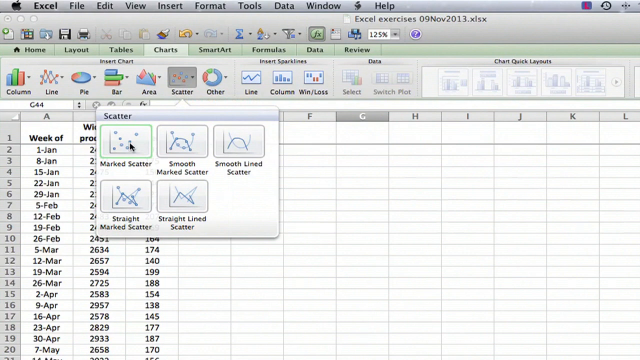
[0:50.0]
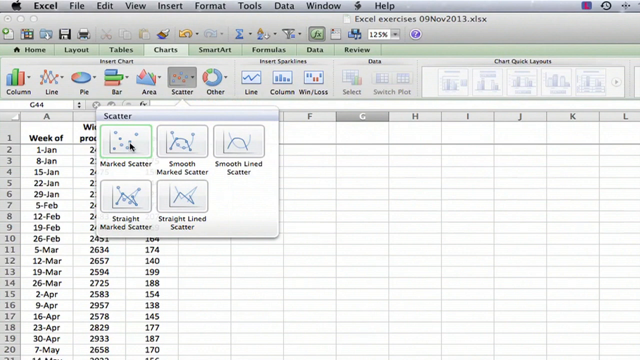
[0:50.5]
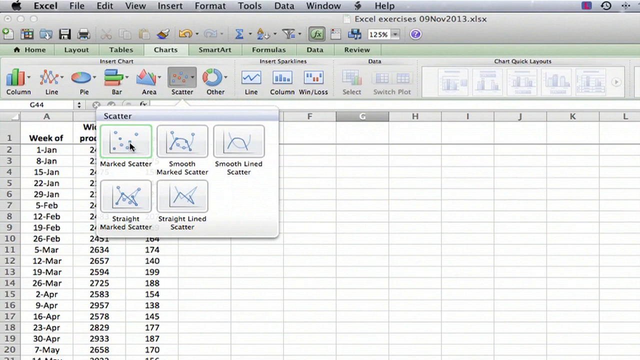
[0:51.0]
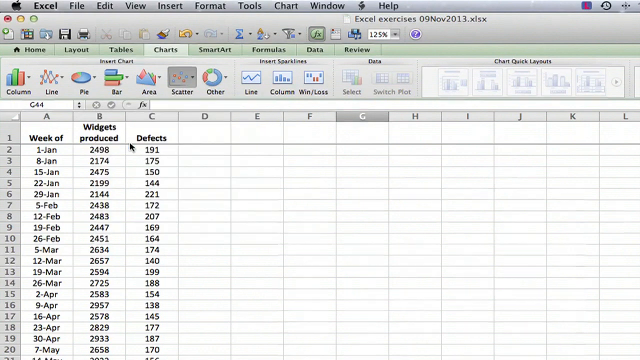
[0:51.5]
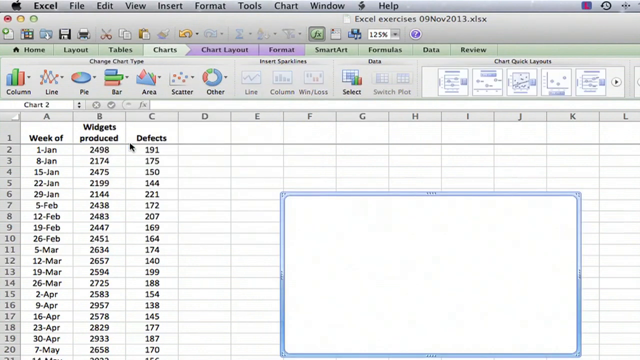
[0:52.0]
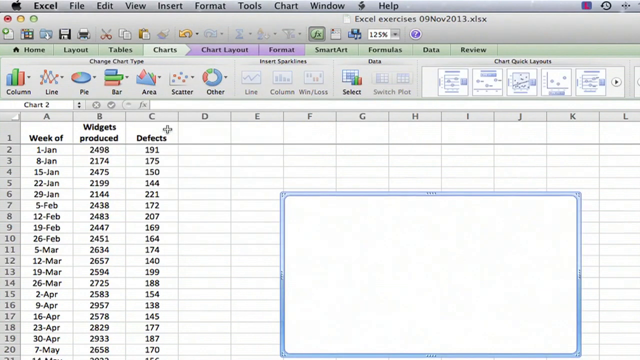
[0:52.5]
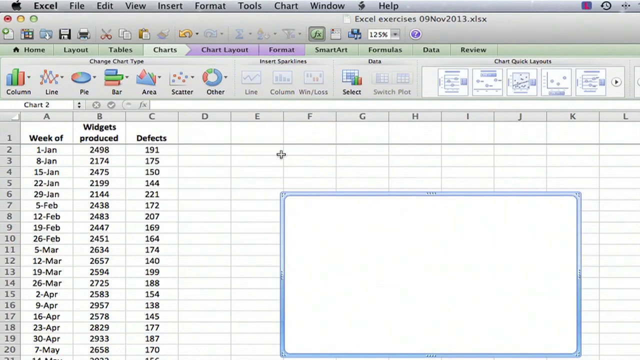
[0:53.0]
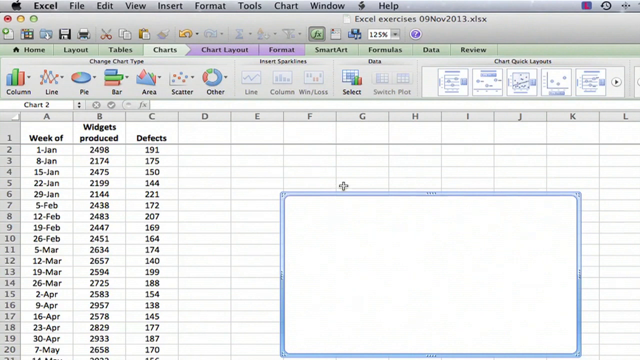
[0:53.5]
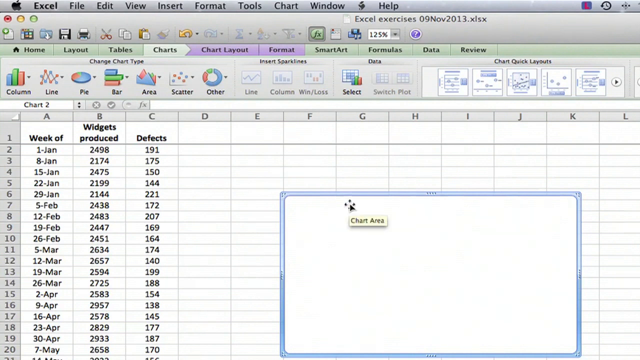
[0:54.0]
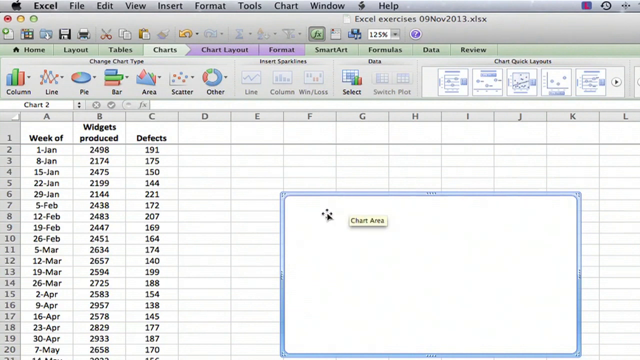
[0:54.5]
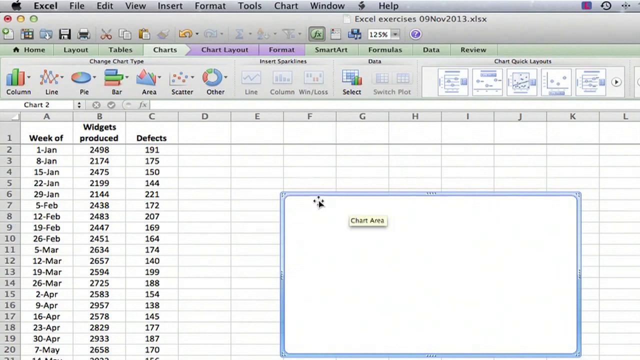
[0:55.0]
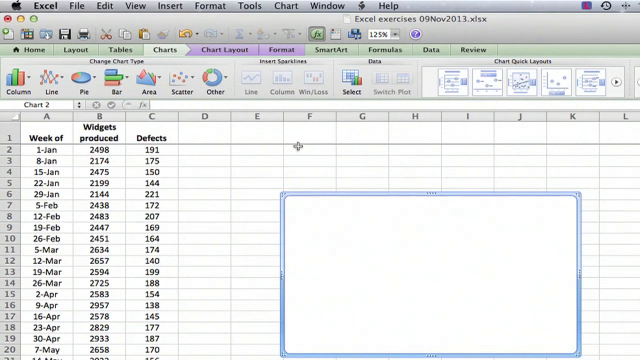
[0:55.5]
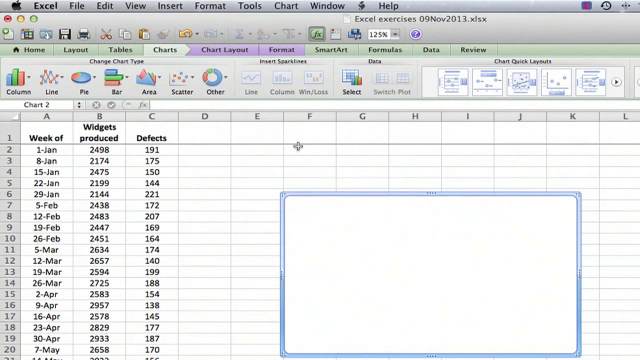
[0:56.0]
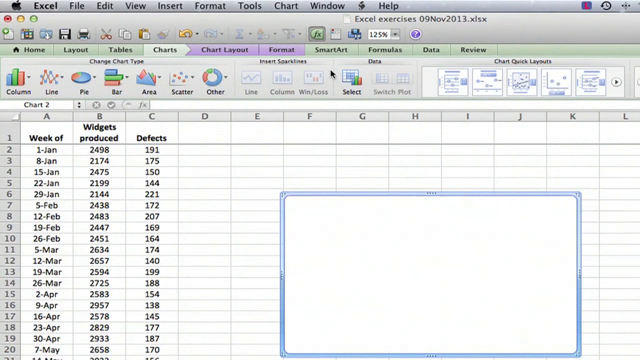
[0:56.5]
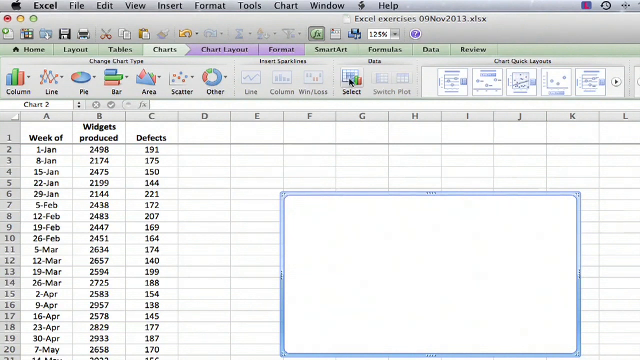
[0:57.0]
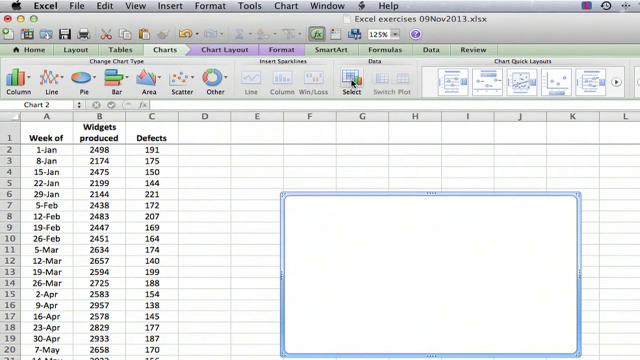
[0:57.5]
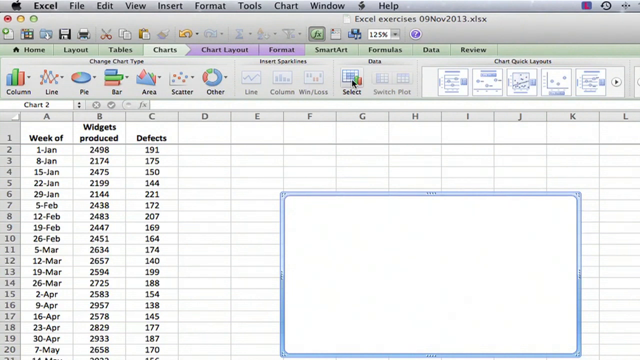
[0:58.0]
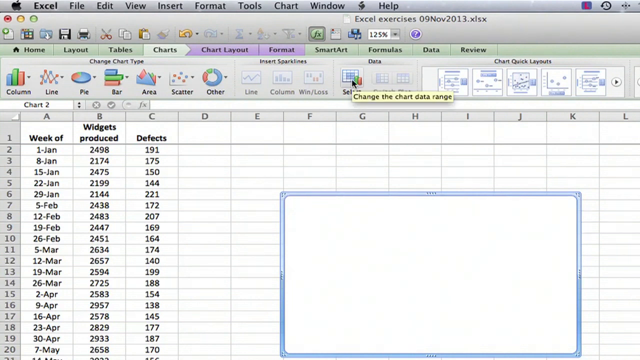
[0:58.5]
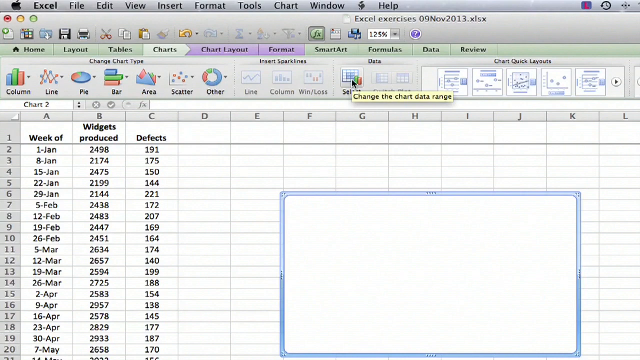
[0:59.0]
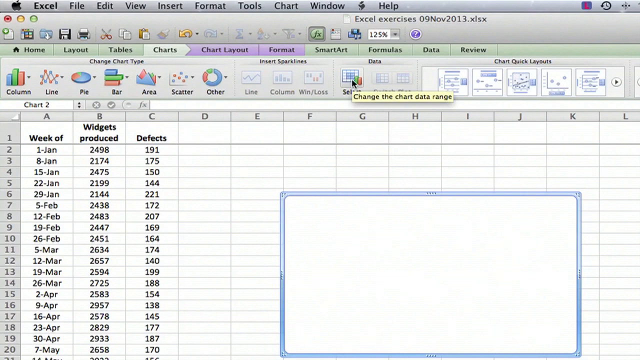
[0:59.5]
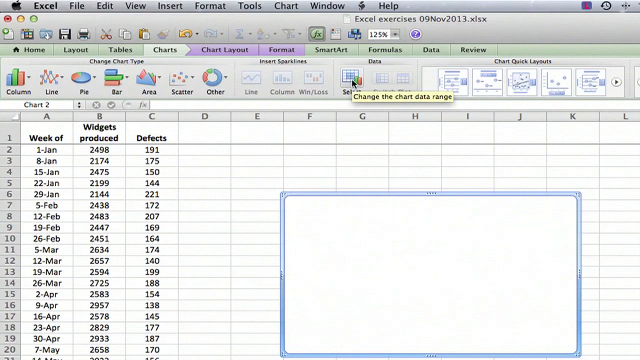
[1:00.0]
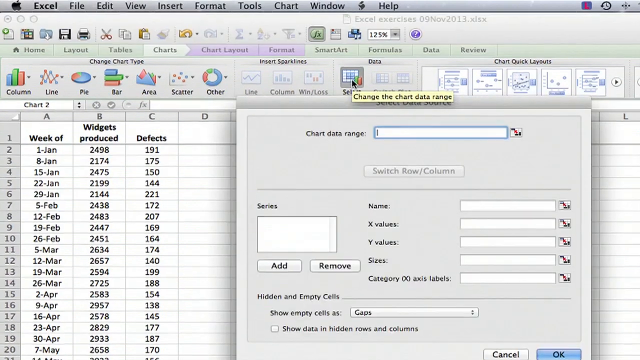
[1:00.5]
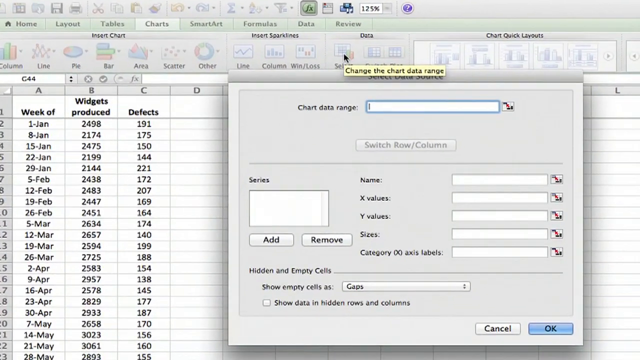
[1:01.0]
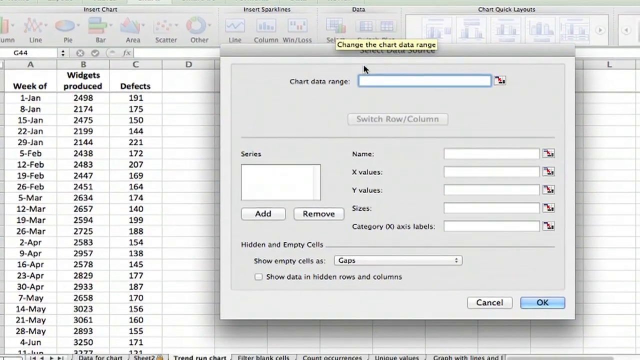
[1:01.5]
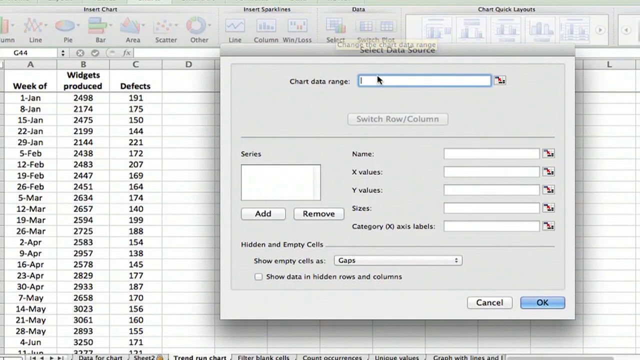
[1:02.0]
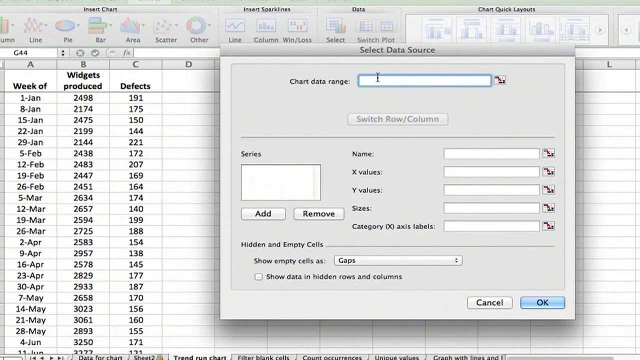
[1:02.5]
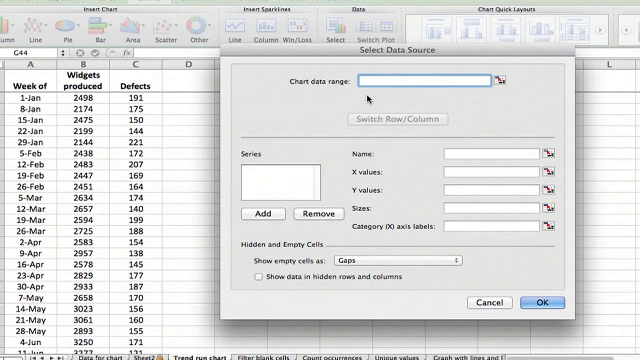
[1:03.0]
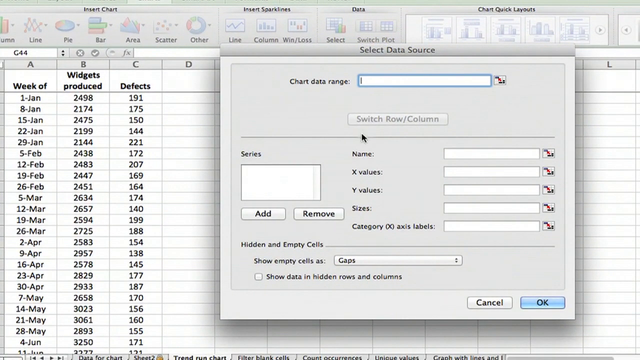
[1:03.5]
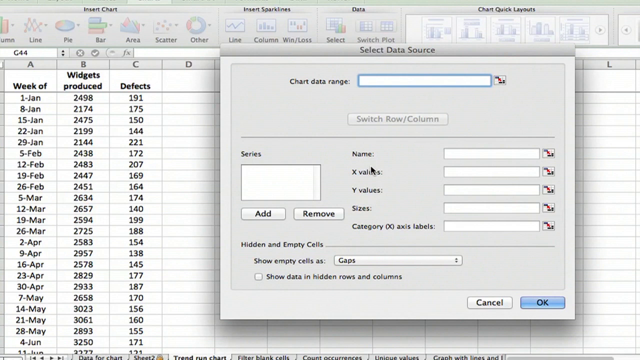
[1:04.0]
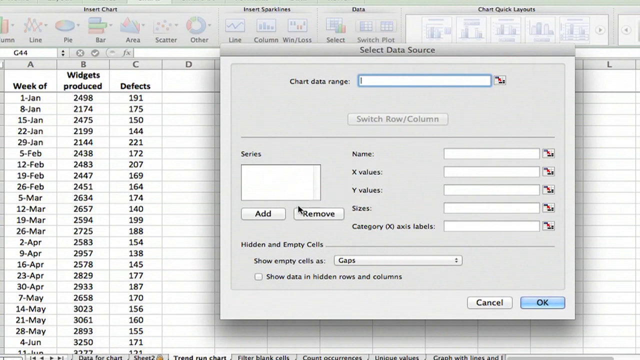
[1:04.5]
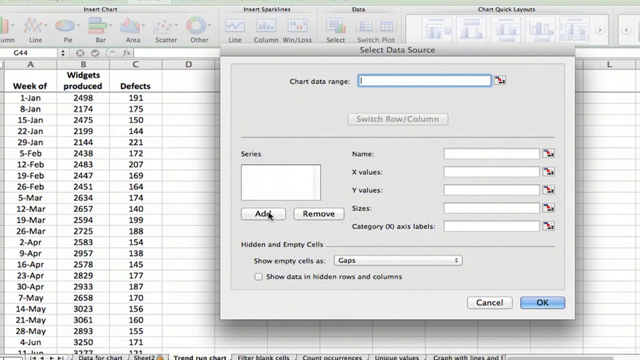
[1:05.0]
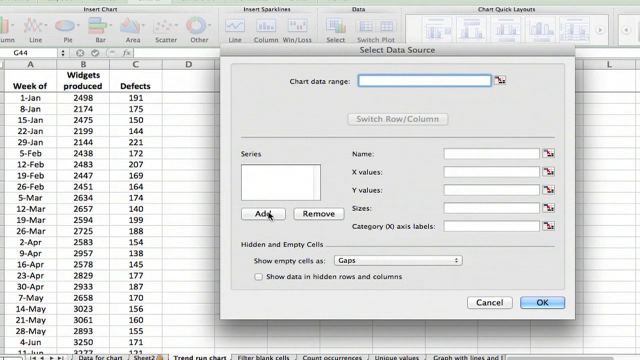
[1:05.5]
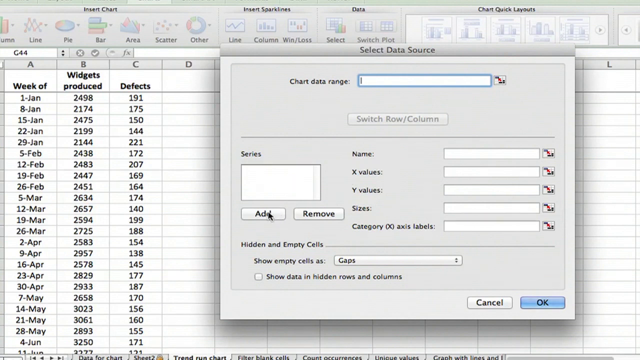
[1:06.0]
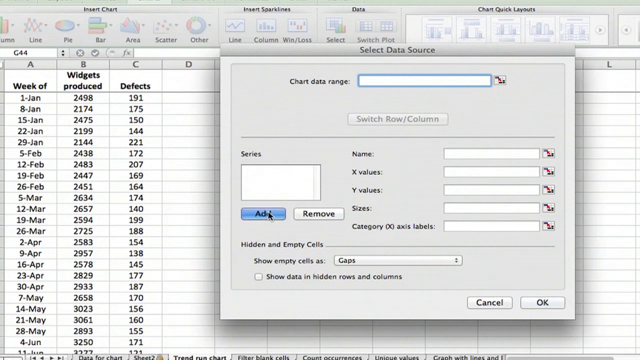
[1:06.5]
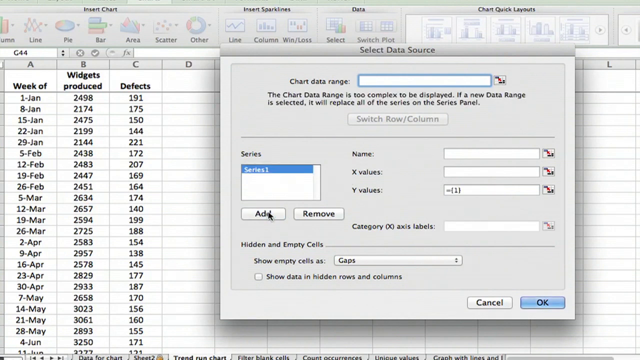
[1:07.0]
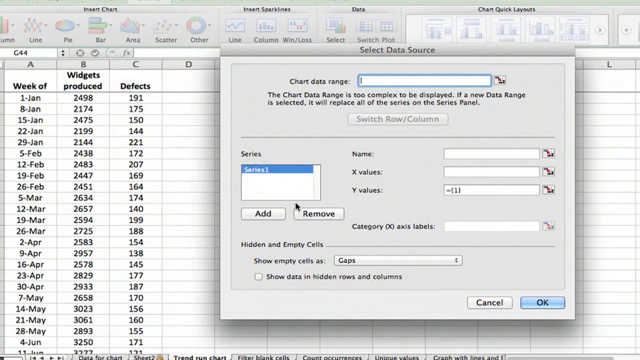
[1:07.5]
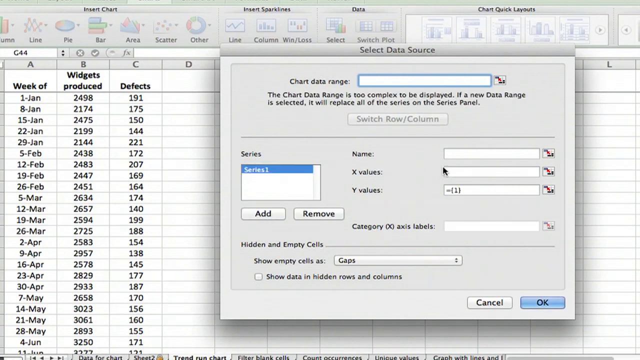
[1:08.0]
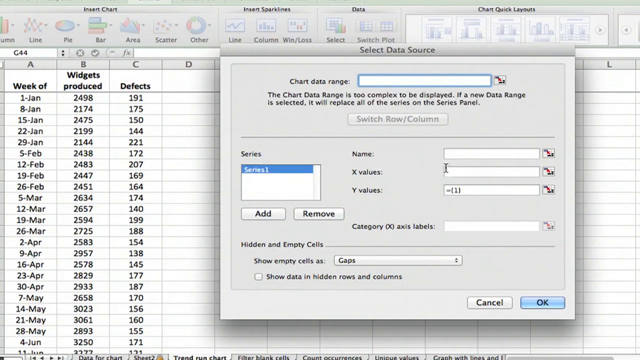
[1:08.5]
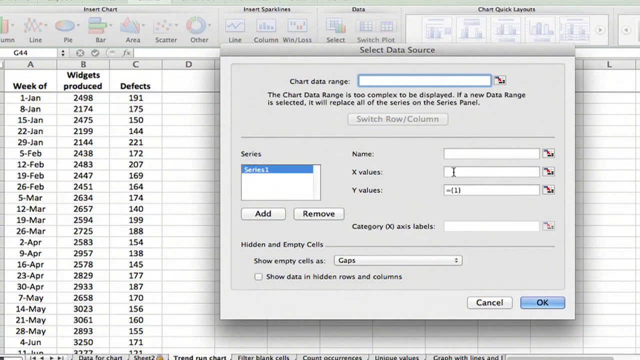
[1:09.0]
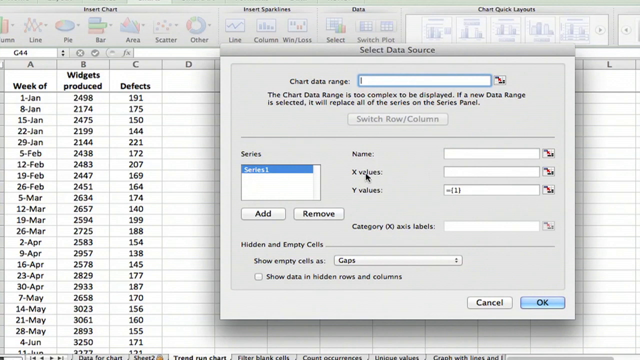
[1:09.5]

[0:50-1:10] An Excel document named "Excel Exercises 09-NOV-2013.xlsx" is in focus. Its data is three columns wide: Column A, Week of; Column B, Widgets Produced; Column C, Defects. Column A is formatted as a date with a three-letter month abbreviation, Column B holds four-digit numbers starting with 2, and Column C holds three-digit numbers starting with 1 or 2. All of the data is centered in the columns. The user has selected Scatter, Marked Scatter from the Charts tab, which produces a chart area. The user clicks the select button to change the chart and adds a series of X and Y values, going through Select Area and then series, clicking the Add button, and placing the cursor in the X column.